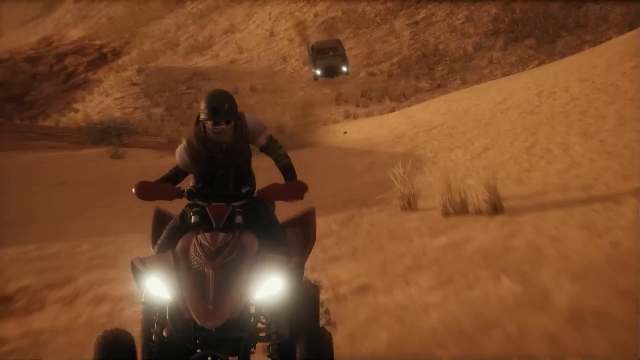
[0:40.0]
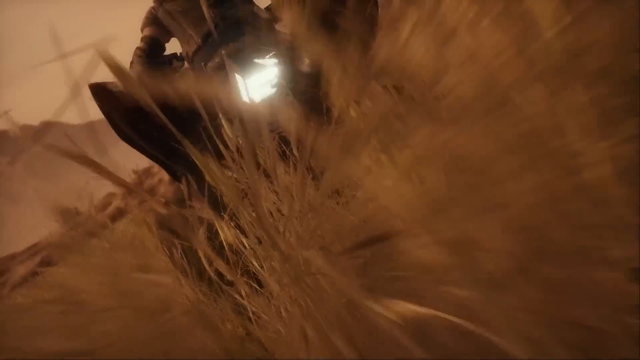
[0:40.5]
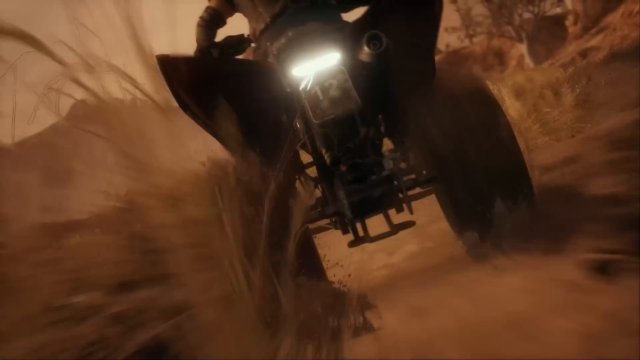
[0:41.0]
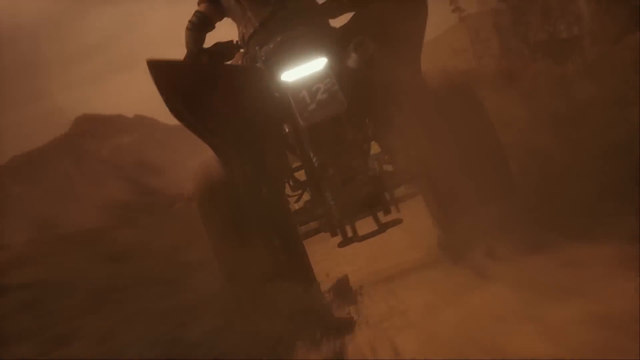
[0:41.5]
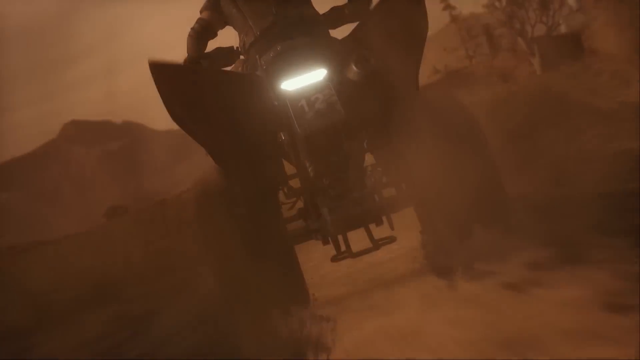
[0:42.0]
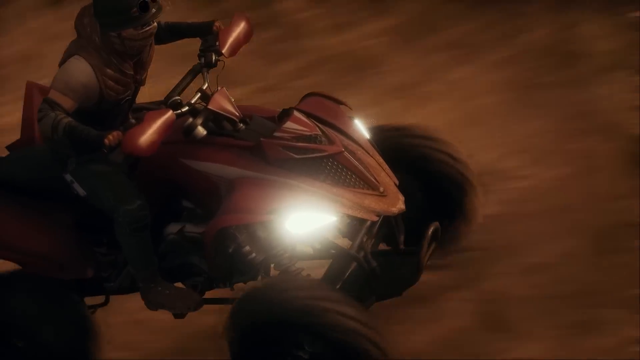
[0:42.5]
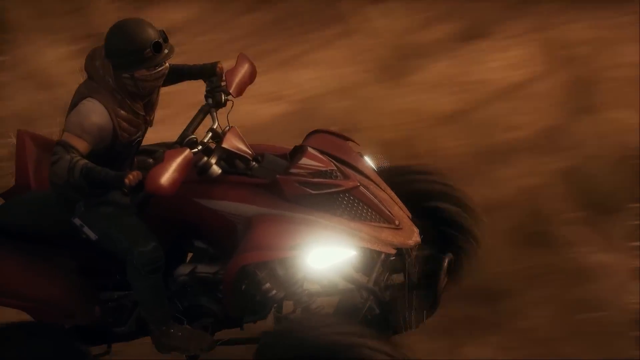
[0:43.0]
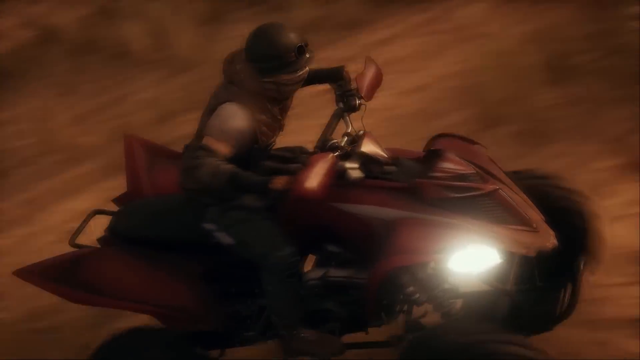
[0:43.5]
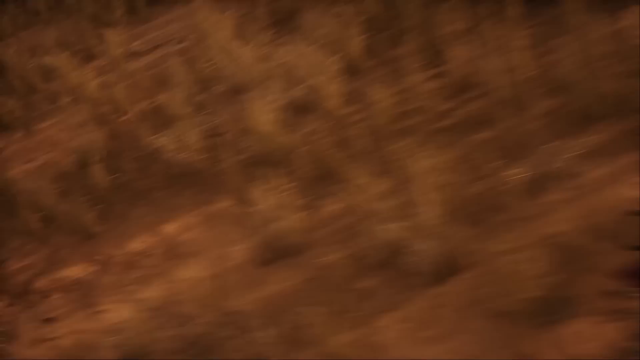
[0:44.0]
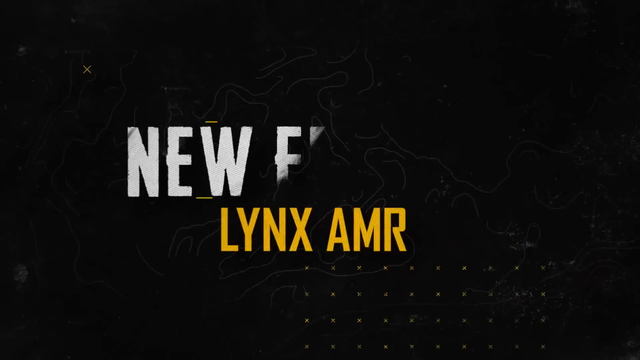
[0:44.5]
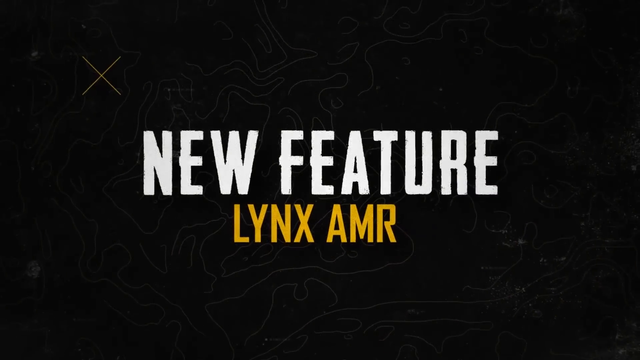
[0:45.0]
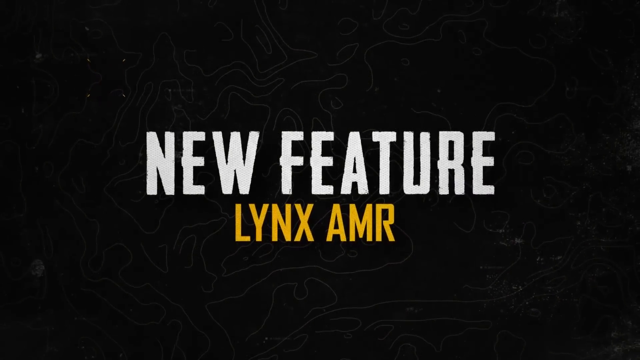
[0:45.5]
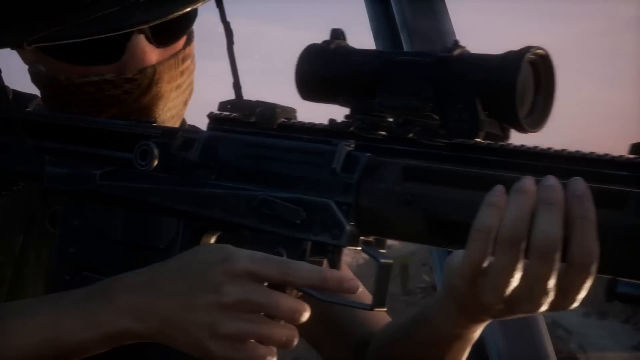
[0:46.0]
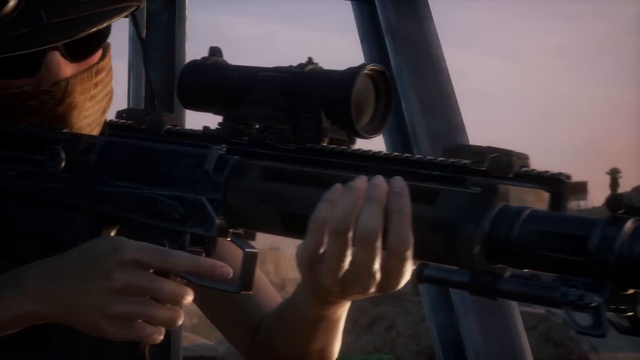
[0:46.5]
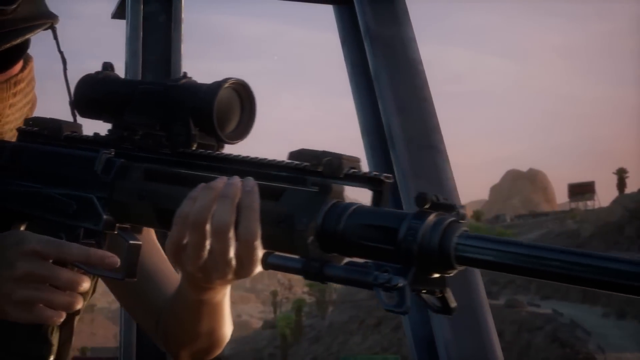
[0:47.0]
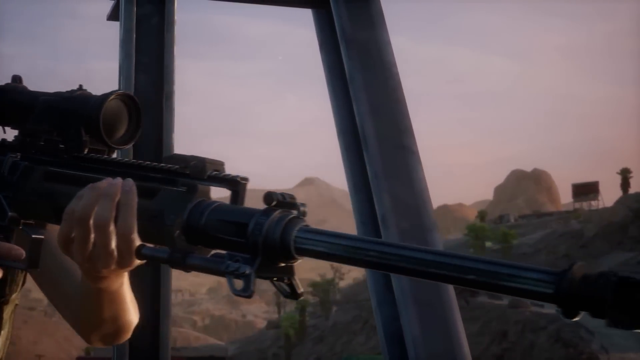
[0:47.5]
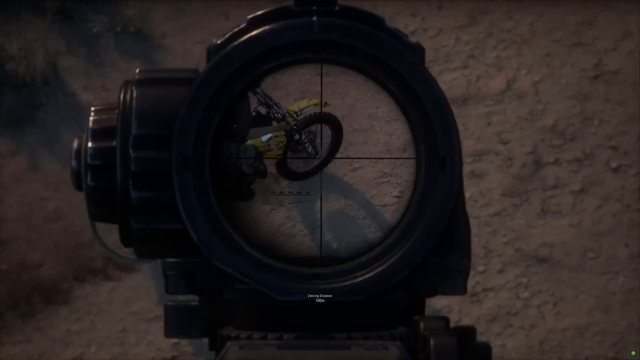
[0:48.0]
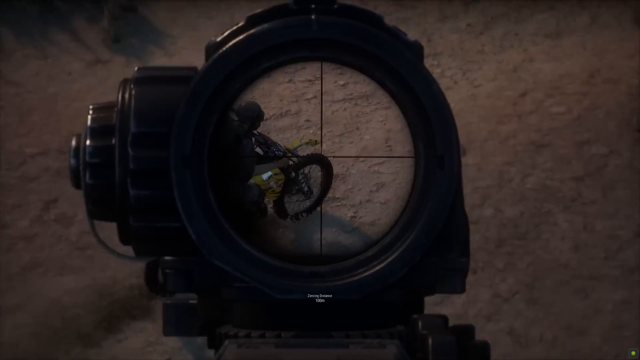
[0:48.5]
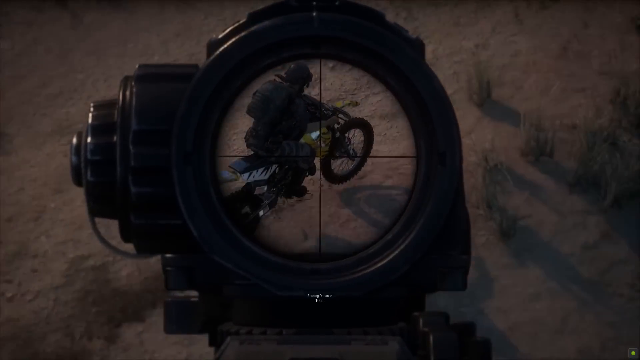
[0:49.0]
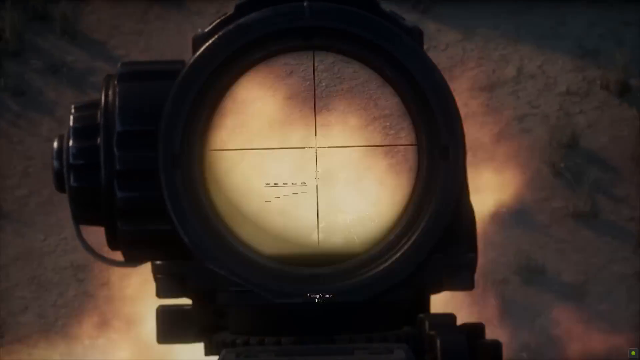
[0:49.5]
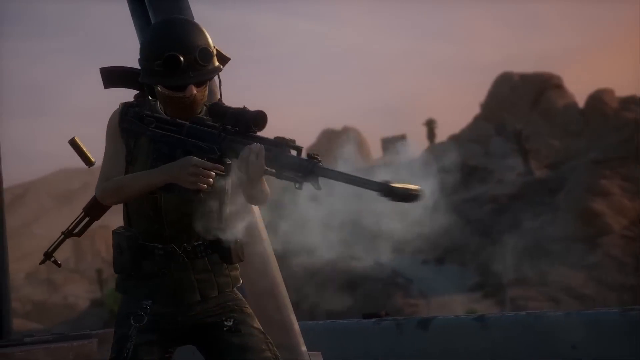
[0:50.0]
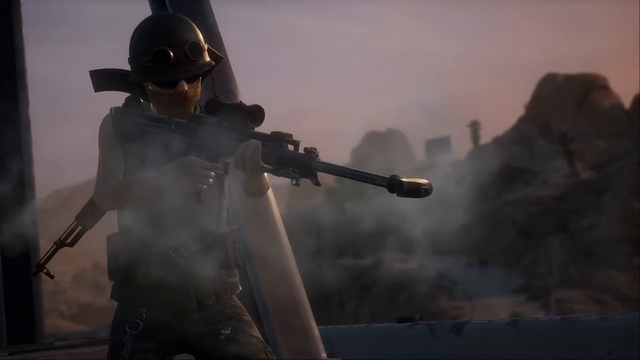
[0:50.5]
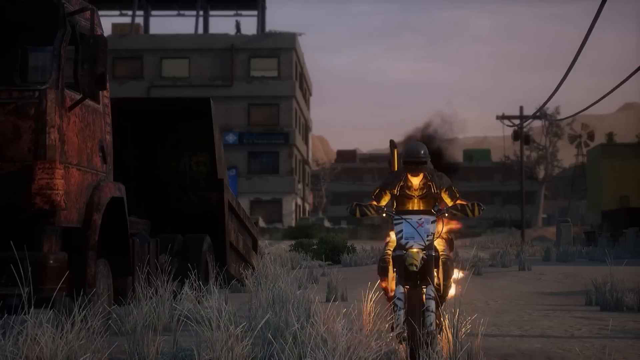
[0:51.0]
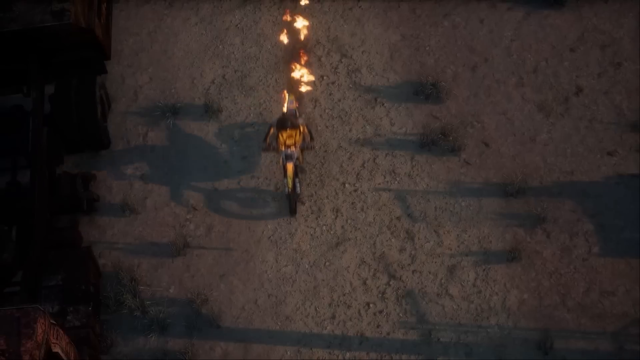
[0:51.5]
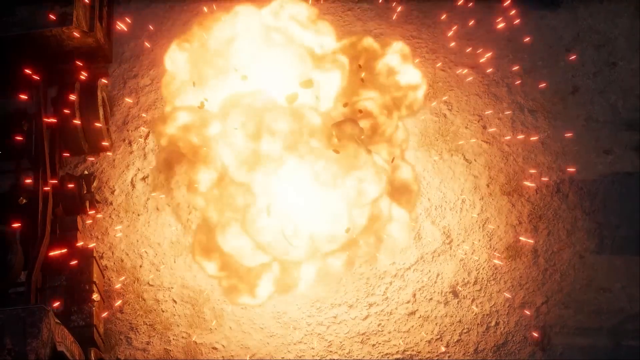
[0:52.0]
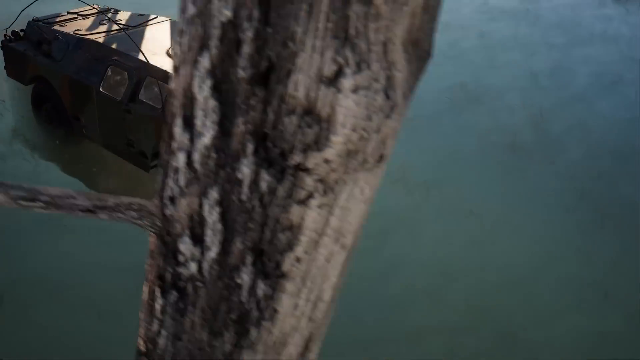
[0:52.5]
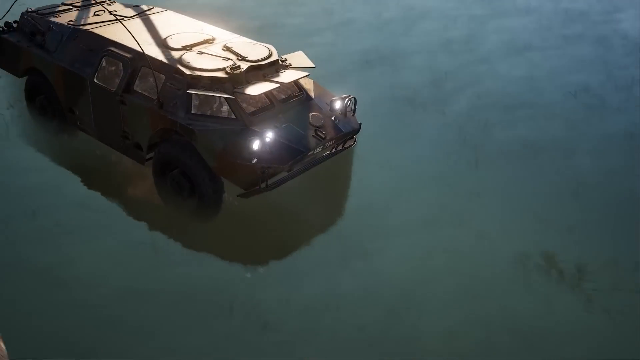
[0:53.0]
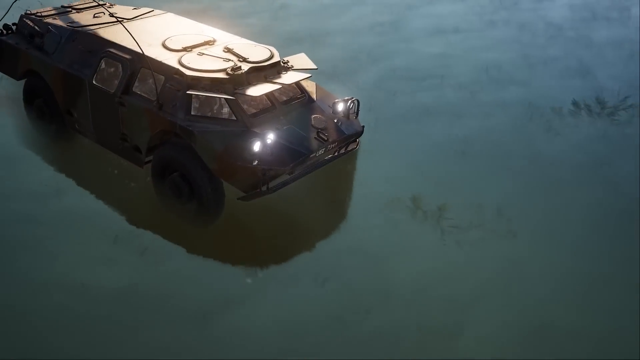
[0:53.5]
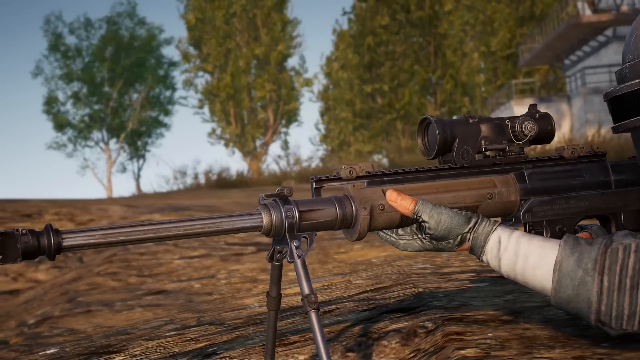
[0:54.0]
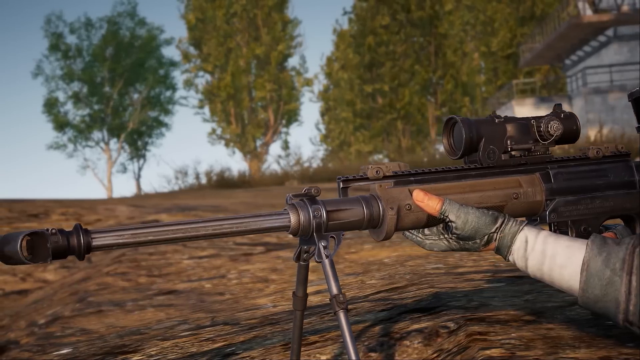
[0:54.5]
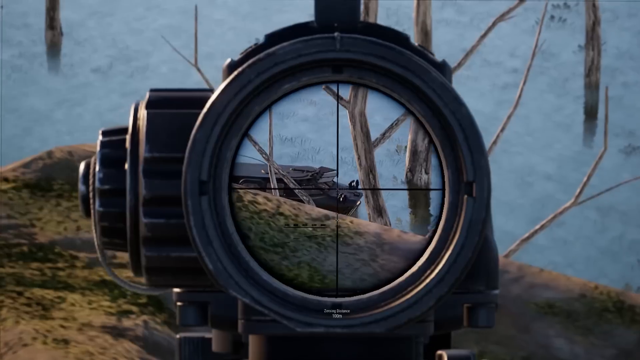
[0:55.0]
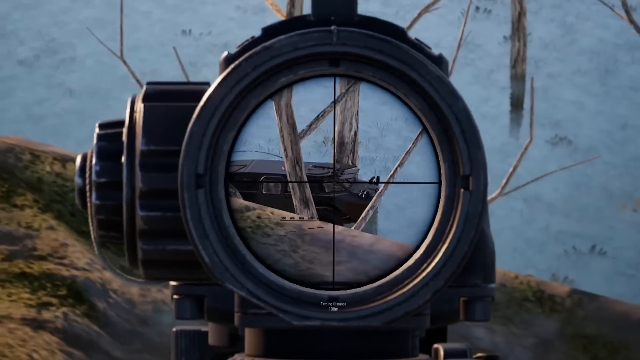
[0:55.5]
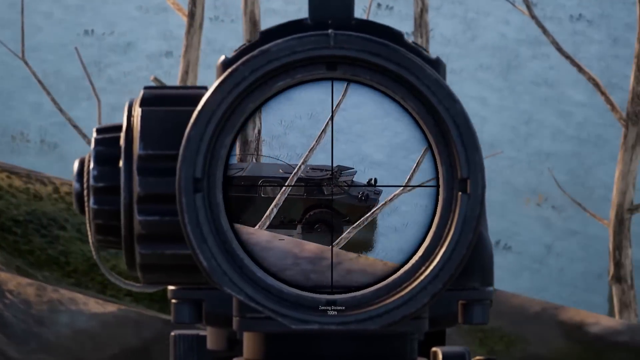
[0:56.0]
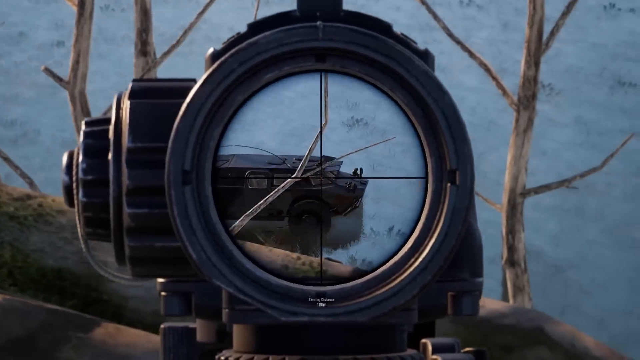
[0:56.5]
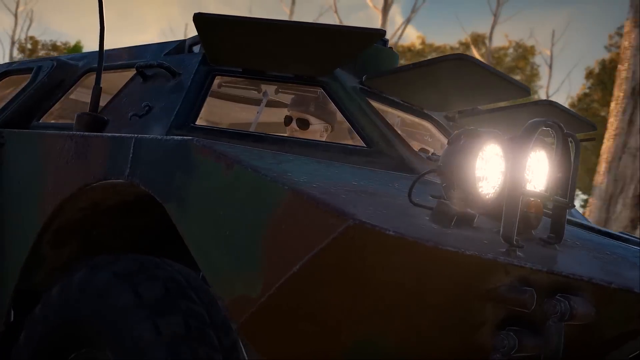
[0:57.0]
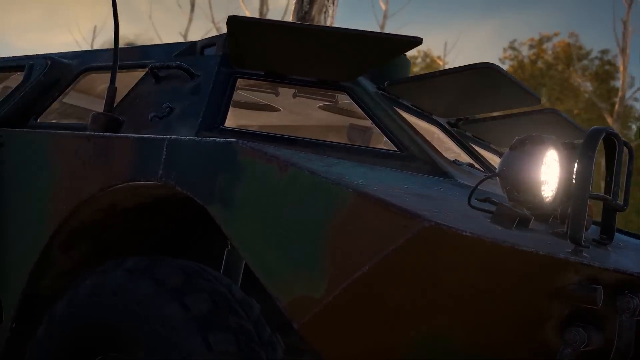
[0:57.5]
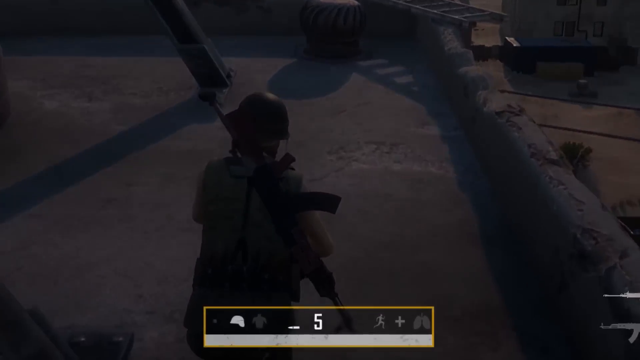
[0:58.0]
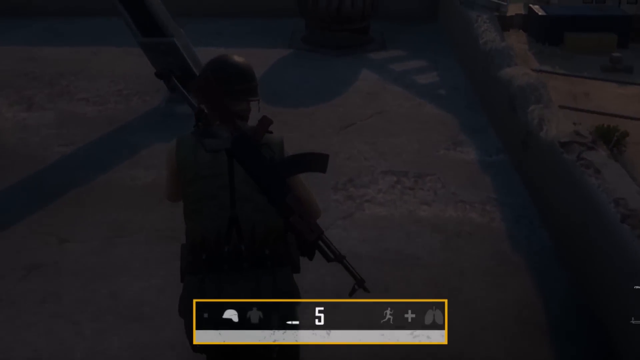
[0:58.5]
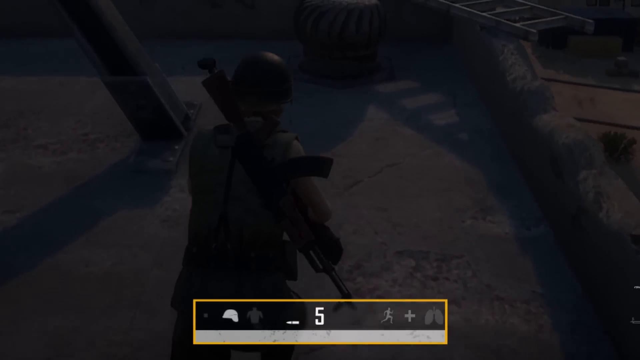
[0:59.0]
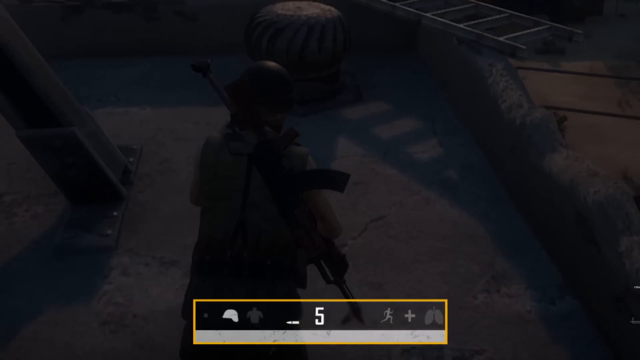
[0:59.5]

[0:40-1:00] Someone rides a quad bike while a car in the distance seems to be chasing him. The camera goes to the back of the quad bike and underneath it, then to the front, and the quad bike disappears off the screen. A black screen reads "new feature, Lynx AMR". Someone with a rifle is shown from his right side, holding the gun with his left hand underneath it for support and his right hand on the trigger. A view through the scope follows as he aims at somebody on a bike and shoots. The man on the bike drives towards the camera while on fire, and then, from a top view, he explodes, so bright that all that can be seen is flames and fire. Some kind of tank is on screen for only about a second, and then another player, potentially holding a sniper rifle, is seen from his left side. He wears a helmet, and his left hand is under the body of the gun. The camera pans down the gun all the way to the end, and then the view is through the scope, showing what he zooms in on: the tank just seen. He focuses on the driver and shoots. In the next view, the man with the gun slowly walks away.